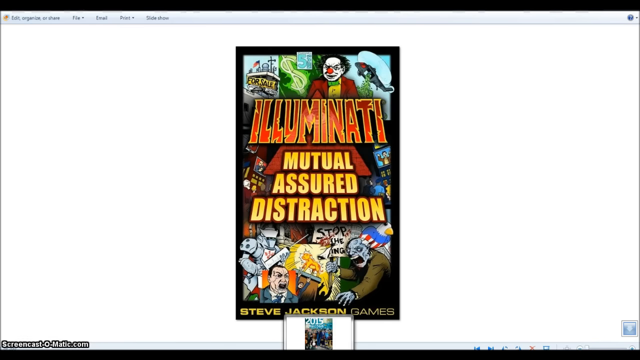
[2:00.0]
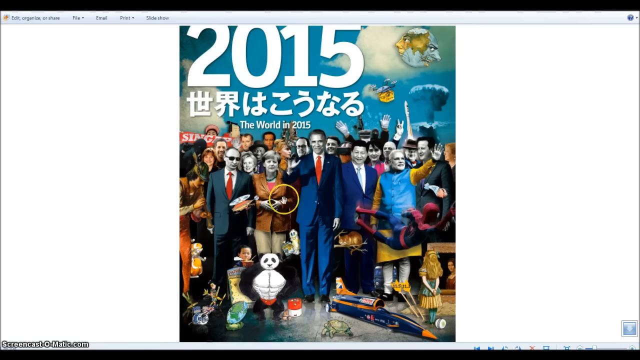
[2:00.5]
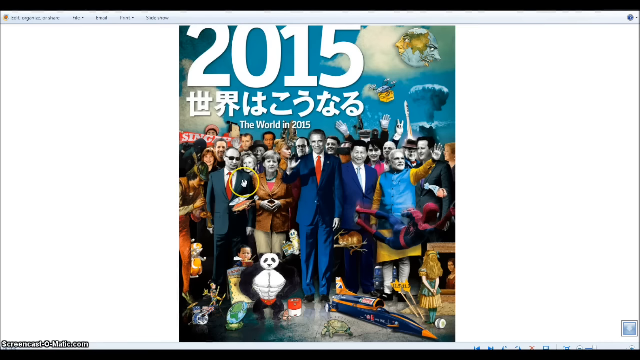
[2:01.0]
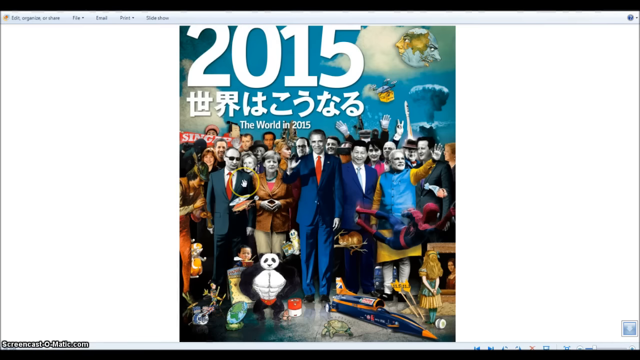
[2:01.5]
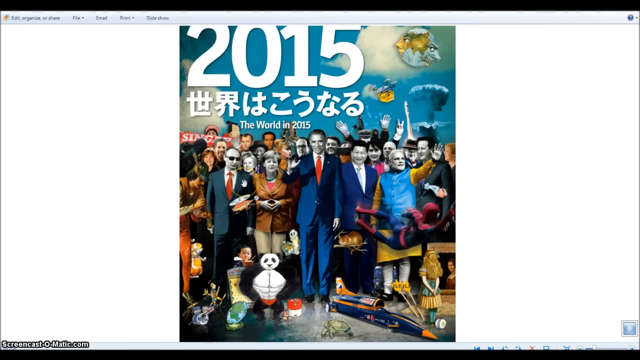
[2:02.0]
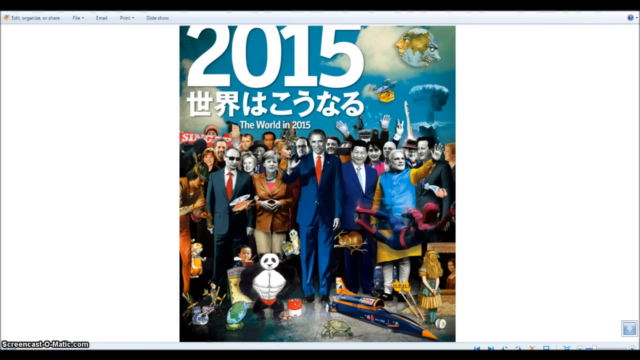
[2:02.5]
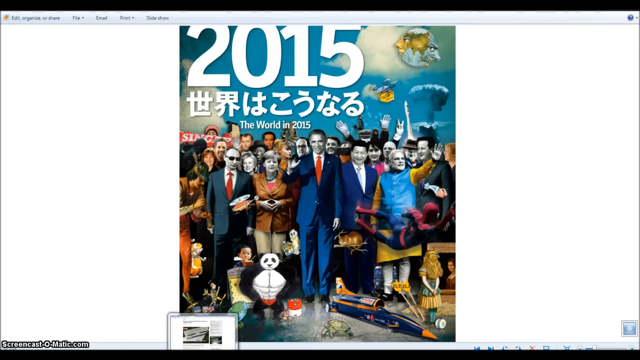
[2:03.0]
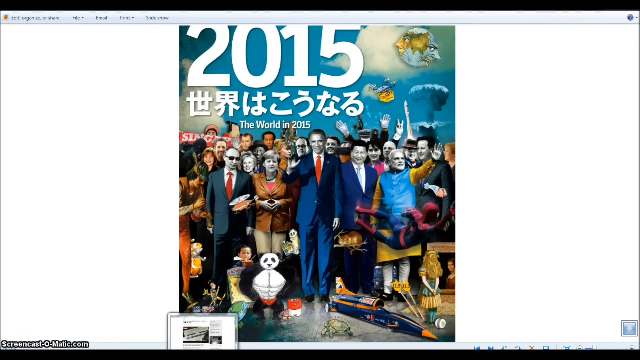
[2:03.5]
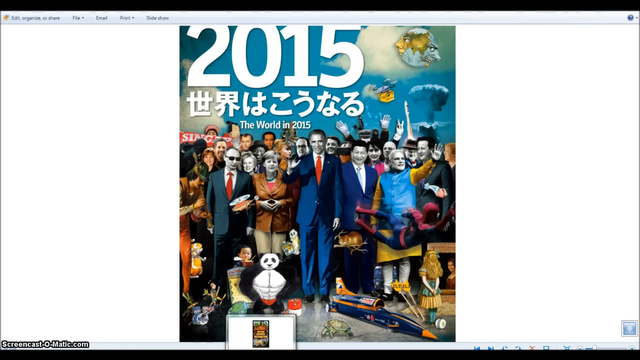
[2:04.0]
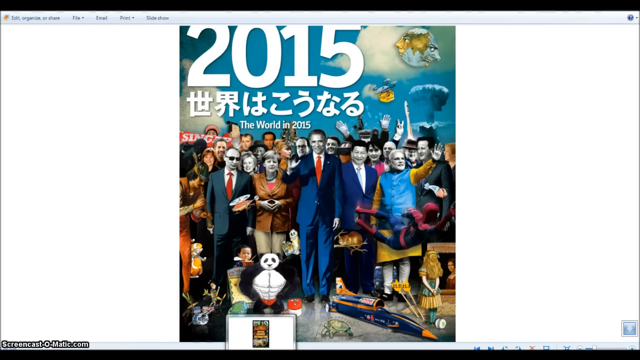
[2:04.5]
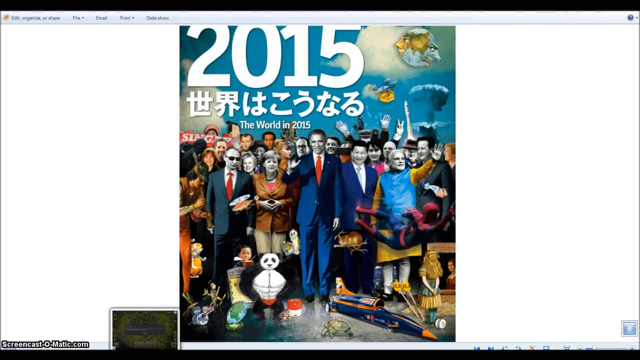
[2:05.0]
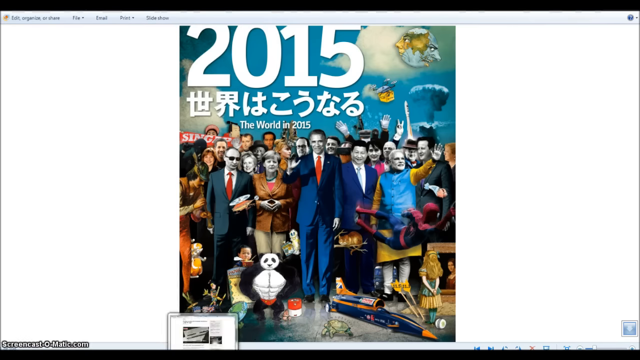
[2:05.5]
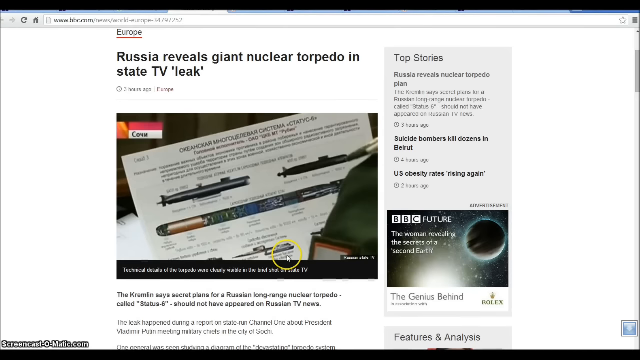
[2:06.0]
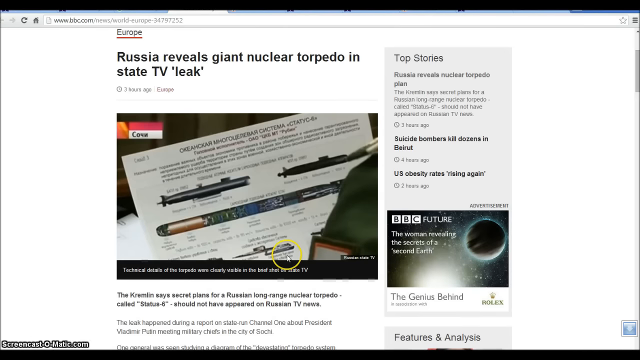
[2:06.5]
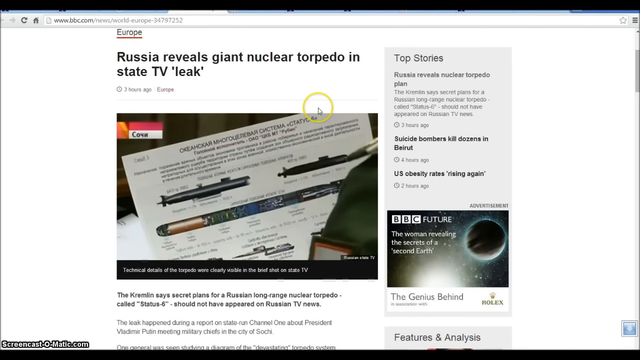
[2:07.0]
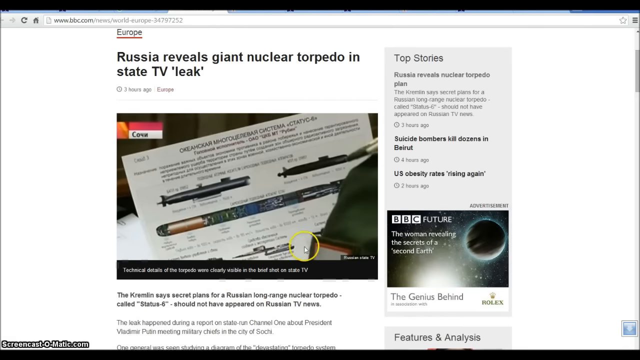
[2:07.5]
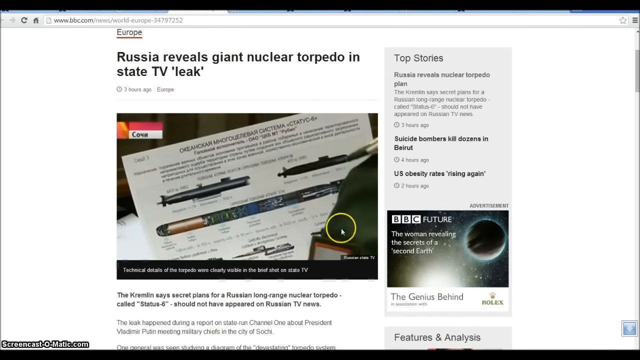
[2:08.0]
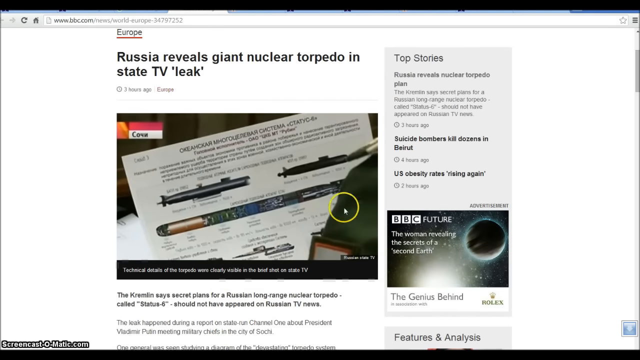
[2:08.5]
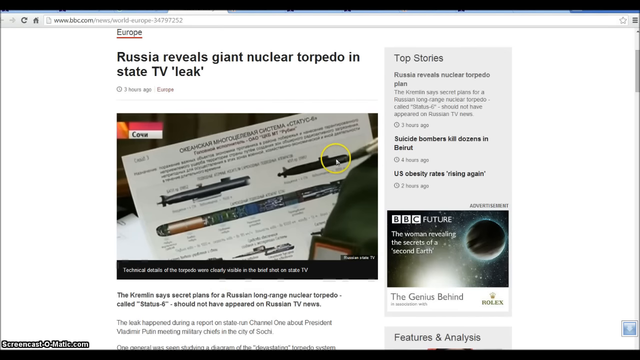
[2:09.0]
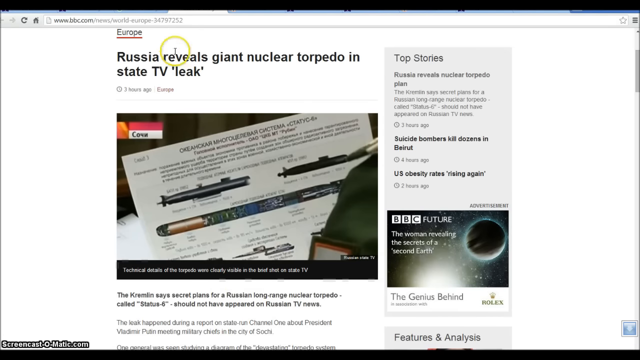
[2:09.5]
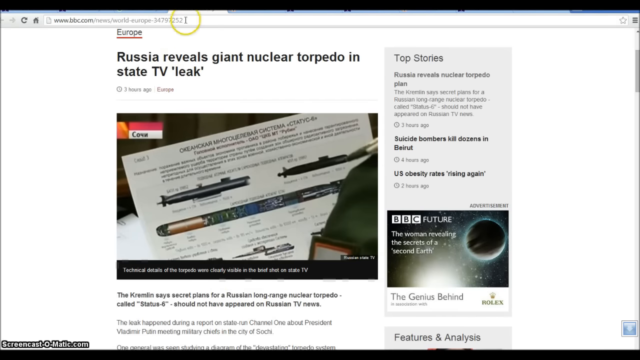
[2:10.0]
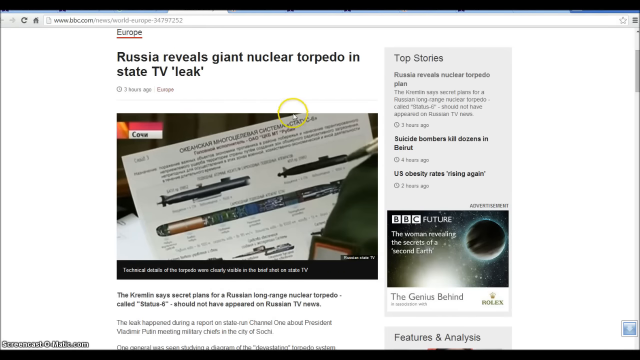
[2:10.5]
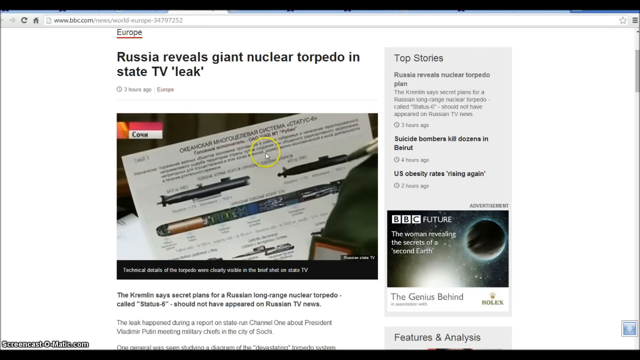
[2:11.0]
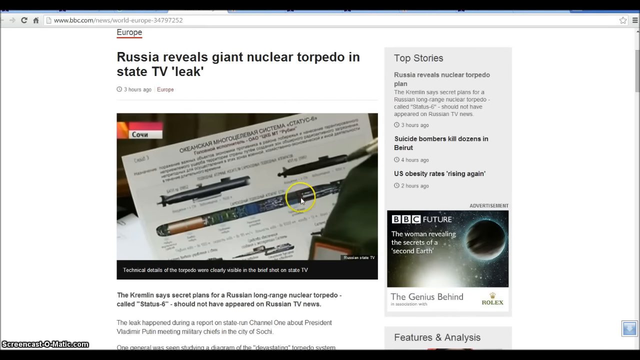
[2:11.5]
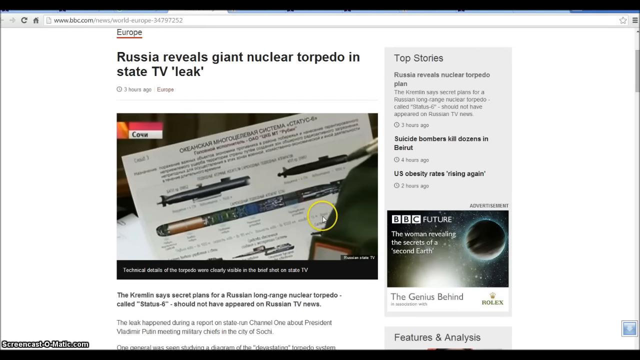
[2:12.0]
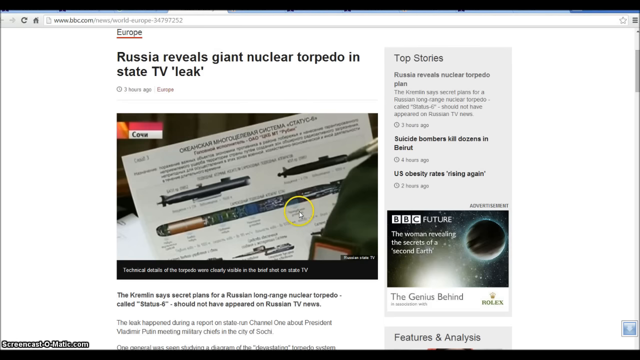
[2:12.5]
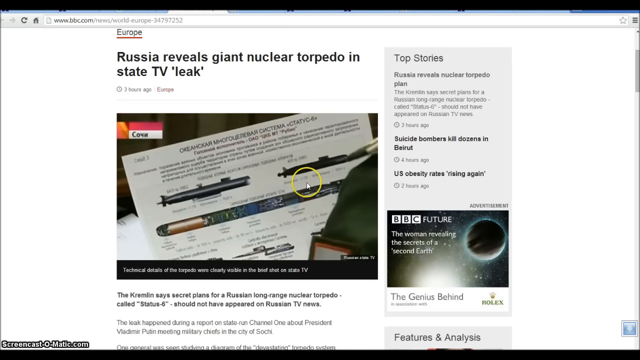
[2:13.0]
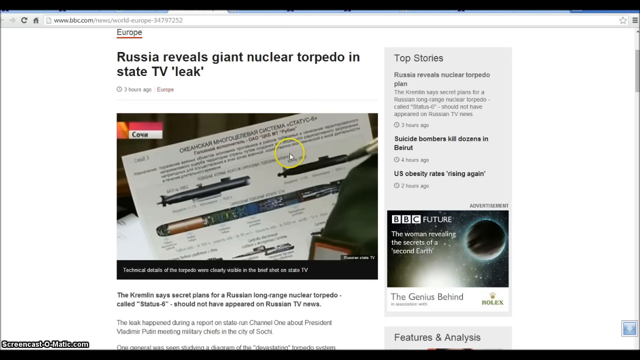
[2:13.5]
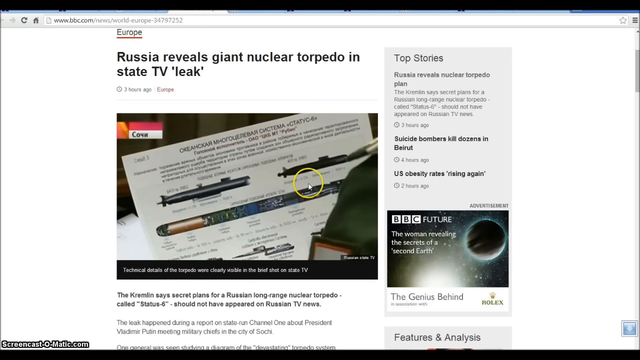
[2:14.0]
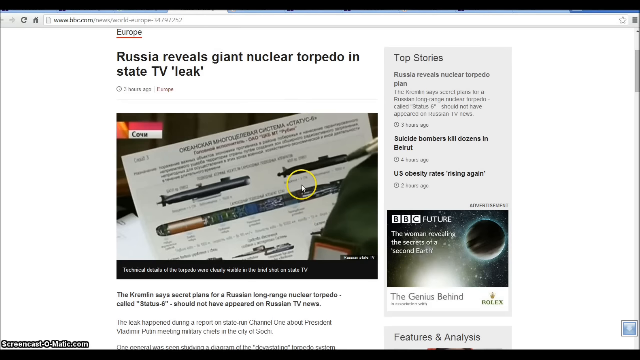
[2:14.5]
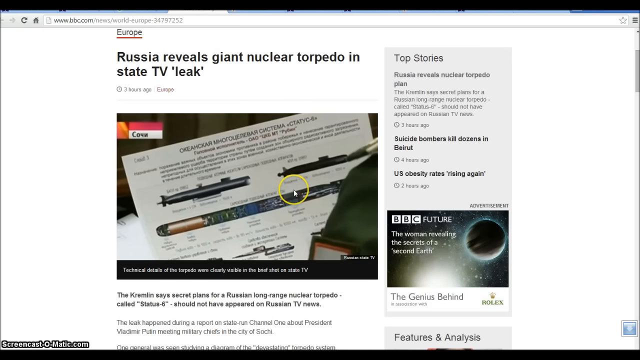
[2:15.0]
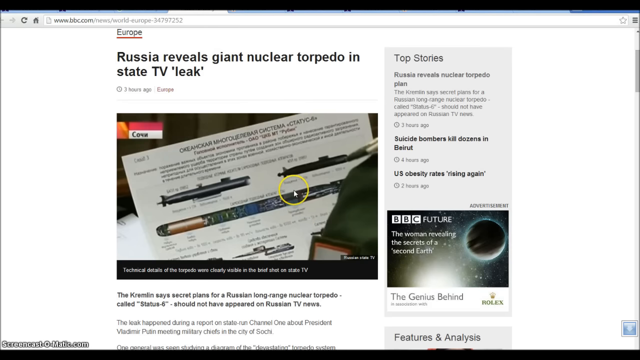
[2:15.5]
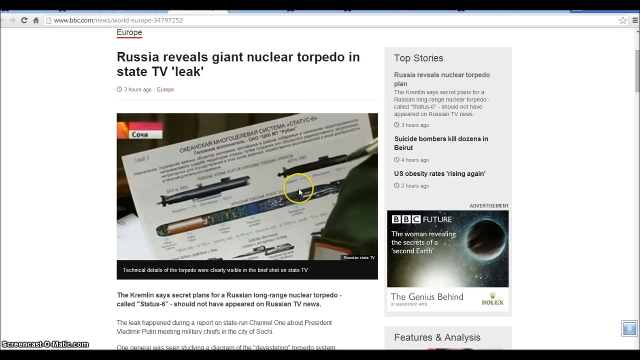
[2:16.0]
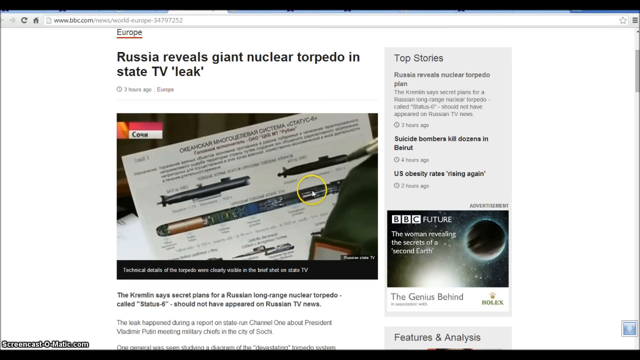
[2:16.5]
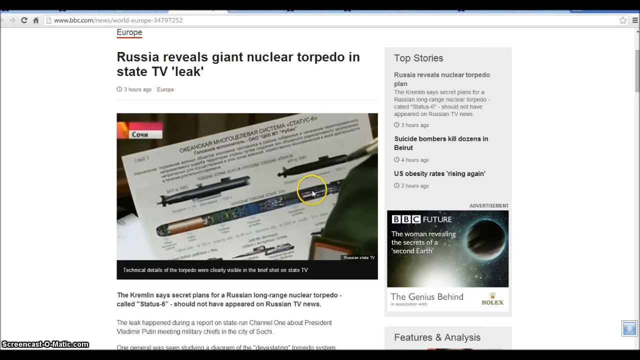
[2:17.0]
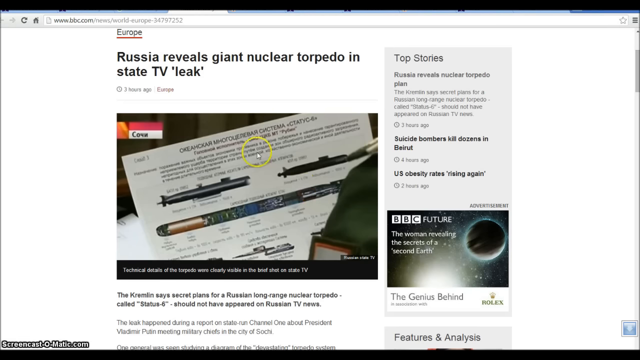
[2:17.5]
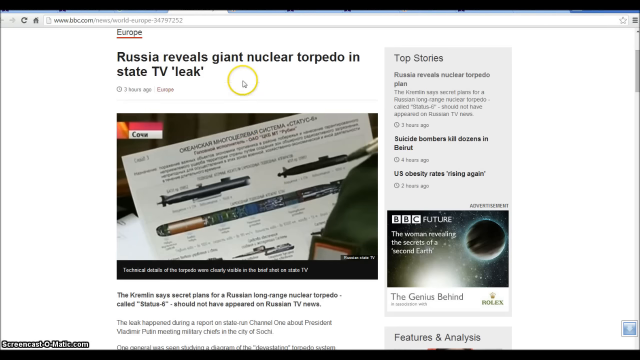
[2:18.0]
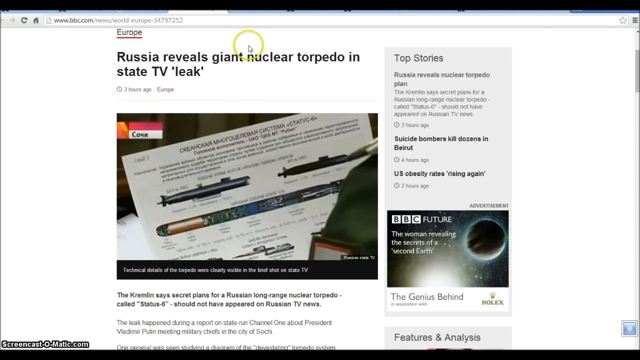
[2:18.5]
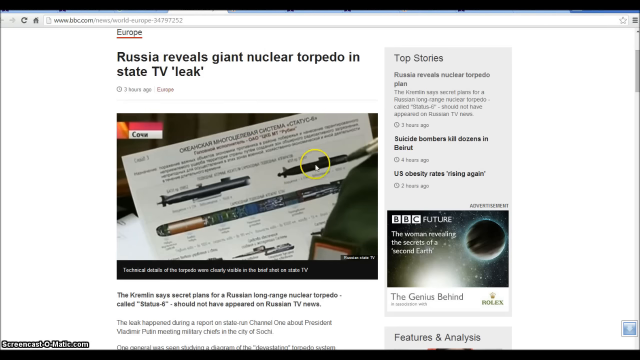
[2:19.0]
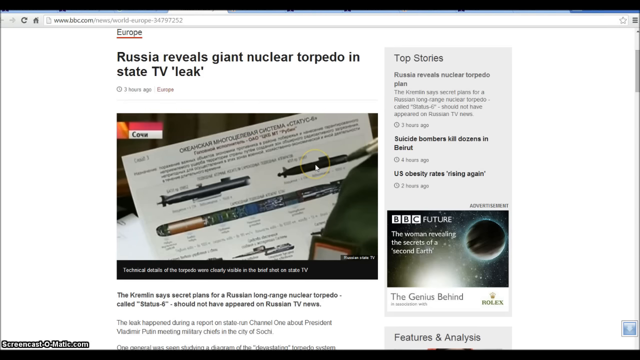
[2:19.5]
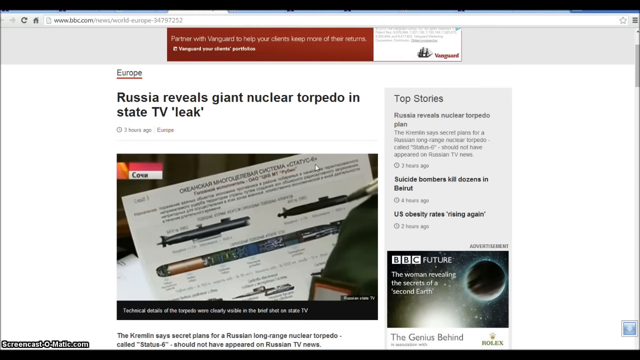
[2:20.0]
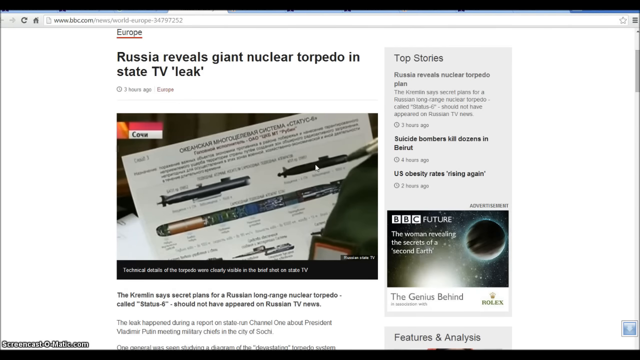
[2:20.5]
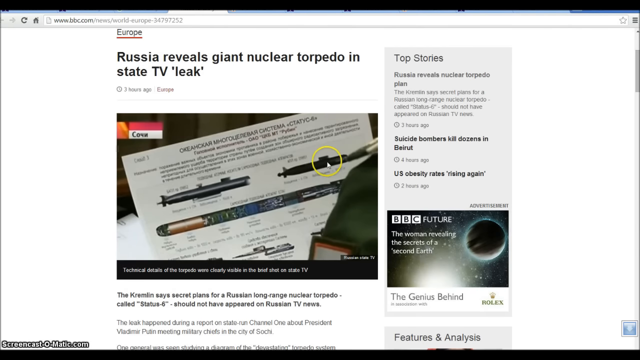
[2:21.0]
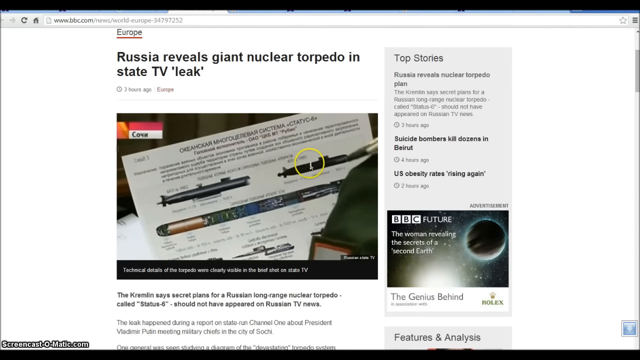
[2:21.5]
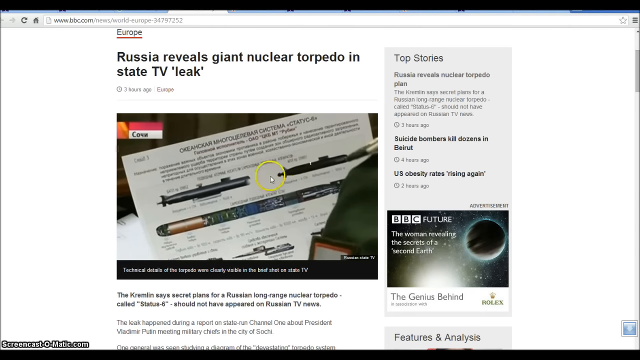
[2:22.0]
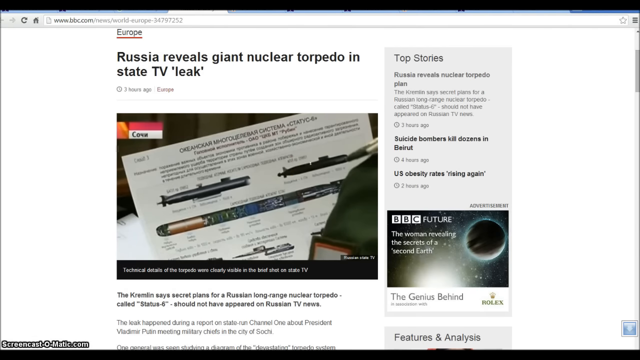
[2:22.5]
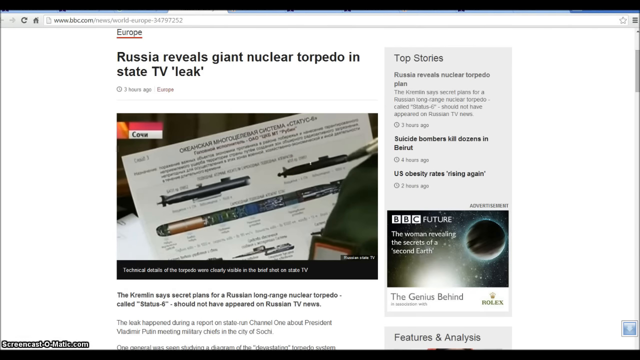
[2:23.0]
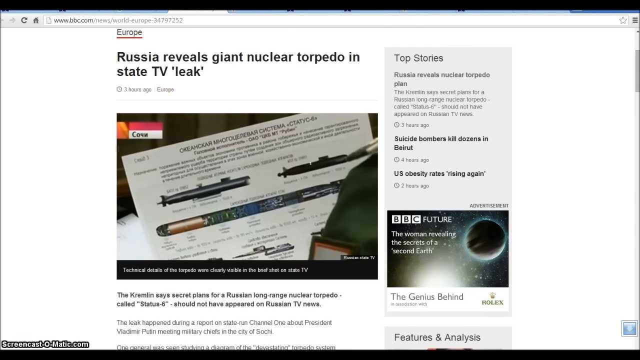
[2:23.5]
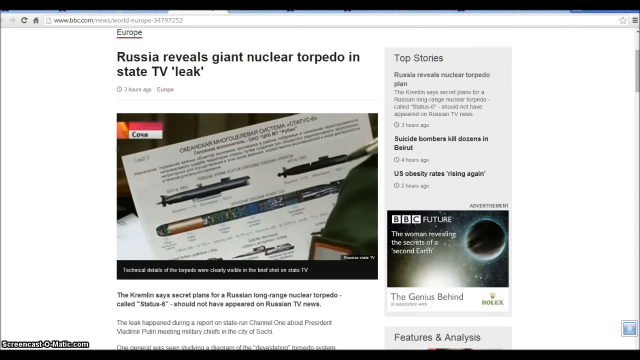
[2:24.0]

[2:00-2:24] The world in 2015 drawing, or comic page, is shown, and the tabs at the bottom are moved. The view goes back to the article about Russia revealing a giant nuclear torpedo, where the cursor moves up, then returns to the picture of the torpedo and moves to the right and up. Only the cursor moves; nothing else changes.